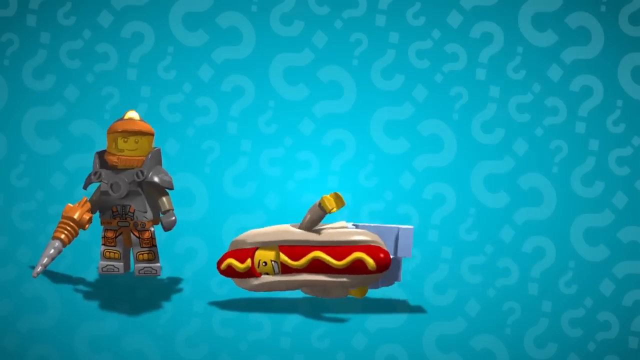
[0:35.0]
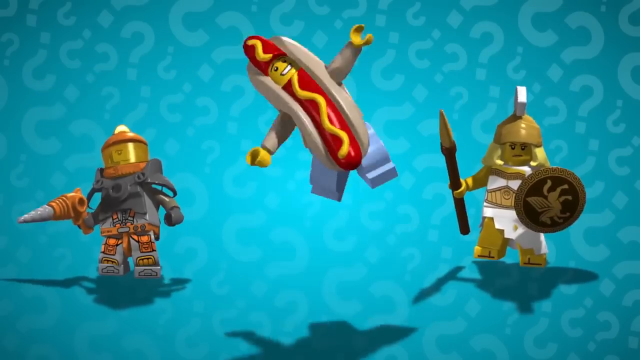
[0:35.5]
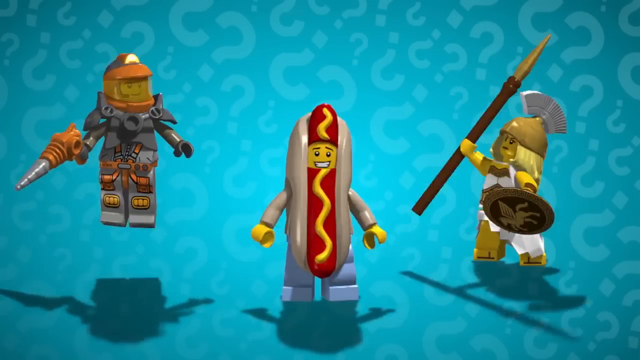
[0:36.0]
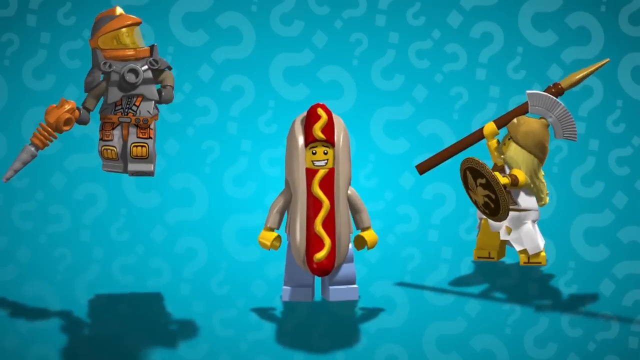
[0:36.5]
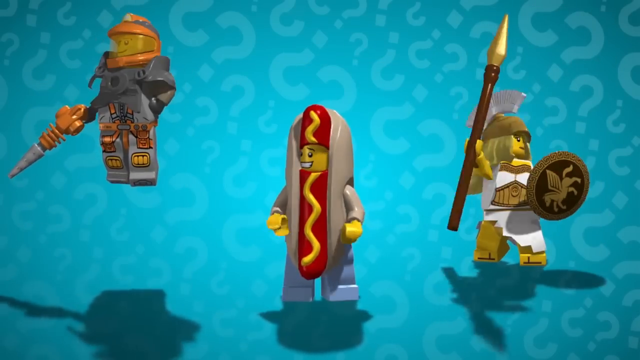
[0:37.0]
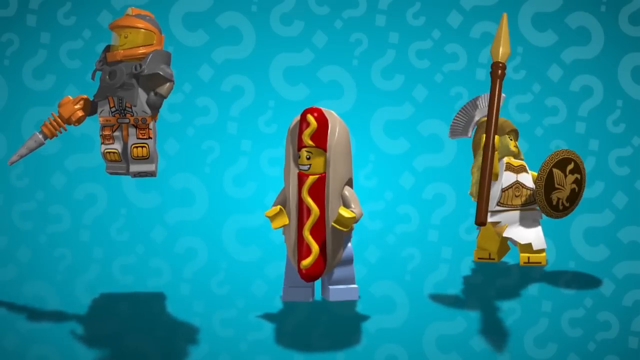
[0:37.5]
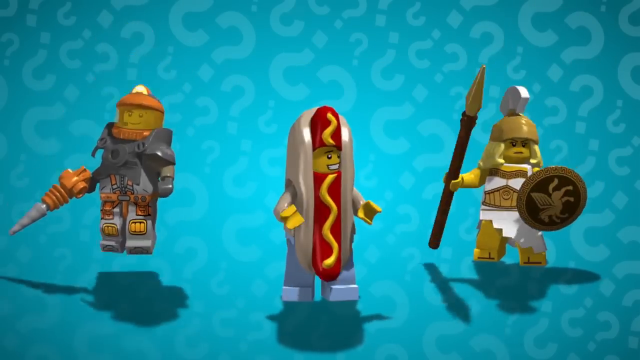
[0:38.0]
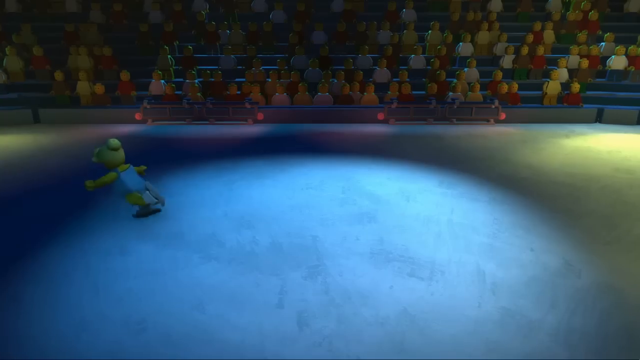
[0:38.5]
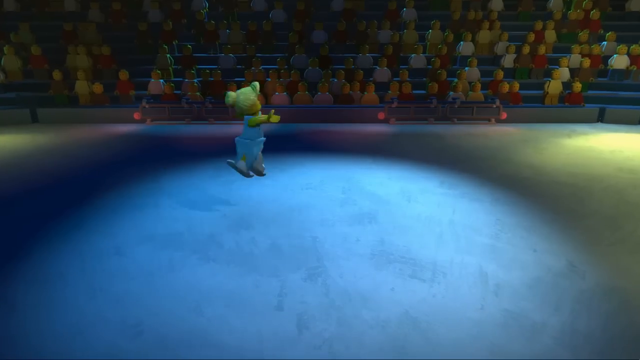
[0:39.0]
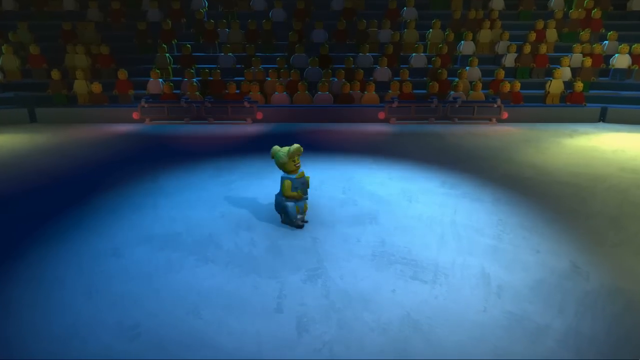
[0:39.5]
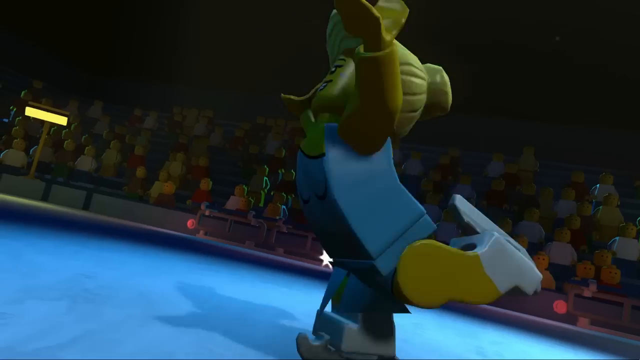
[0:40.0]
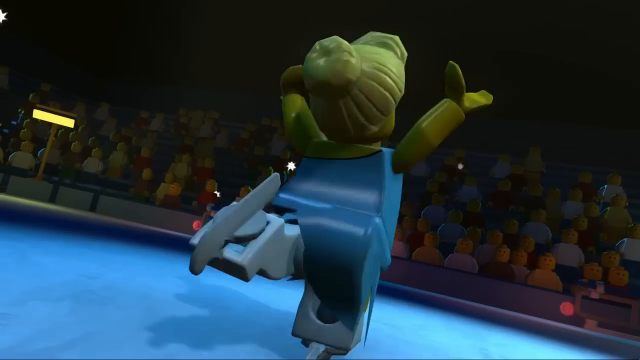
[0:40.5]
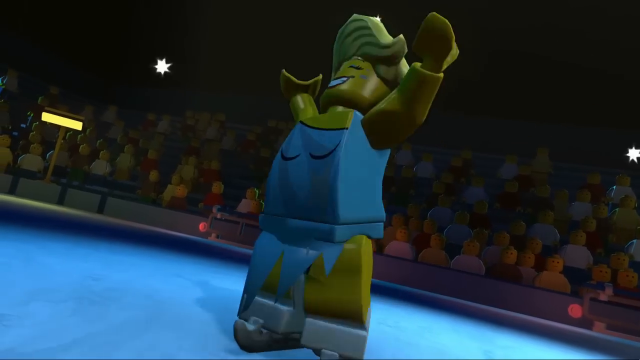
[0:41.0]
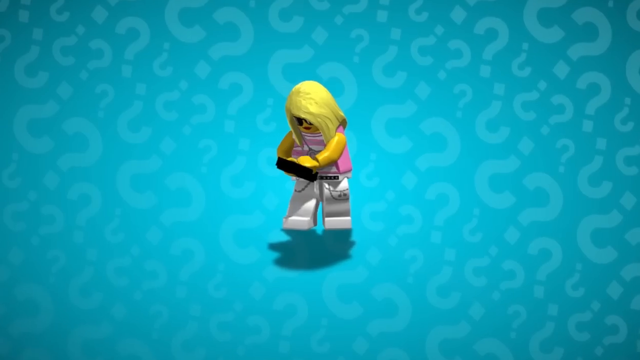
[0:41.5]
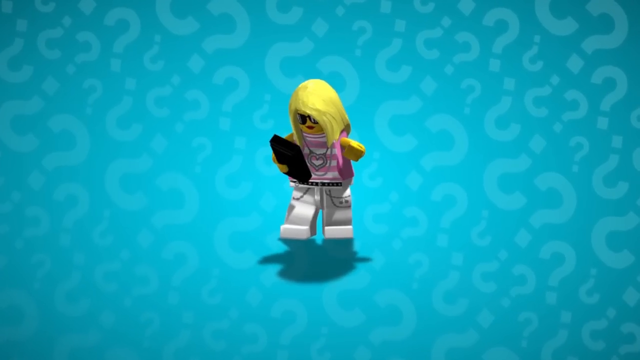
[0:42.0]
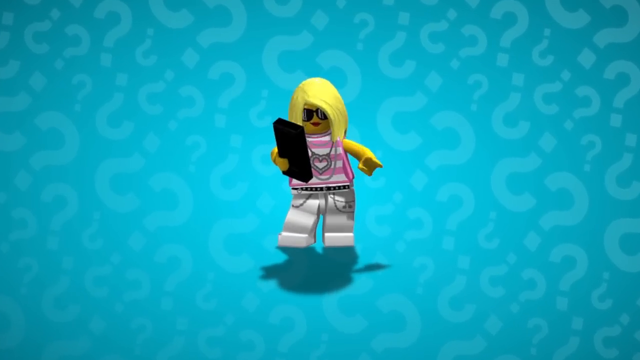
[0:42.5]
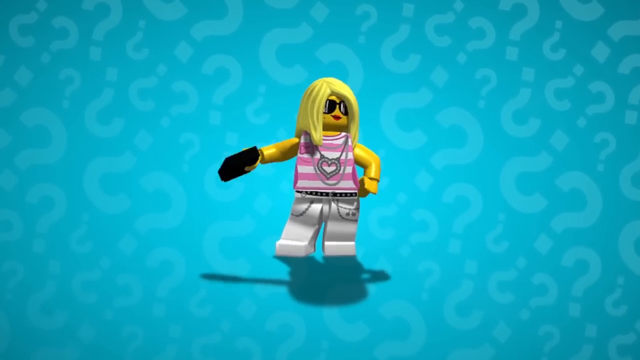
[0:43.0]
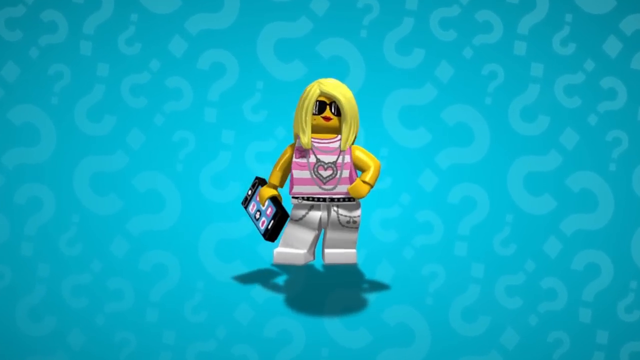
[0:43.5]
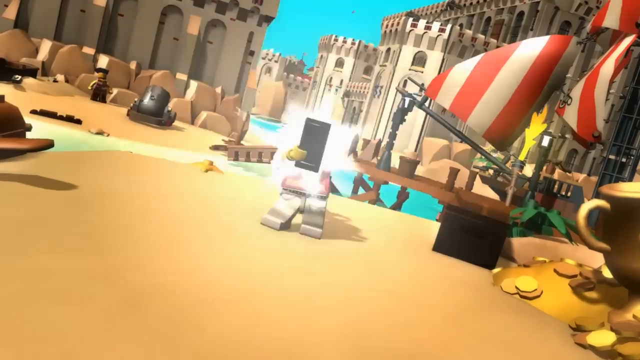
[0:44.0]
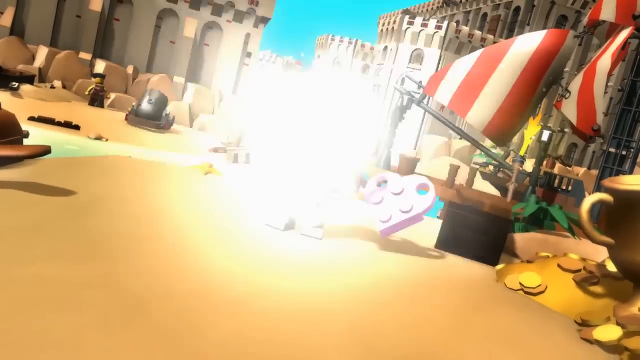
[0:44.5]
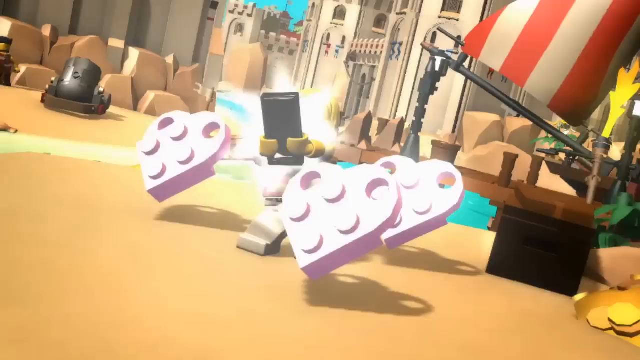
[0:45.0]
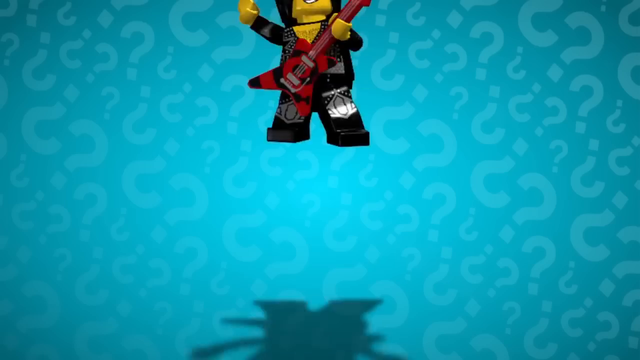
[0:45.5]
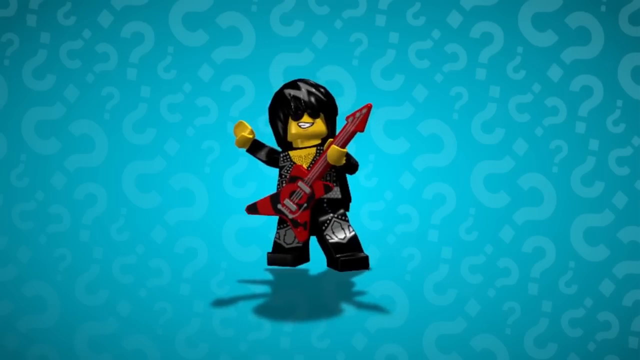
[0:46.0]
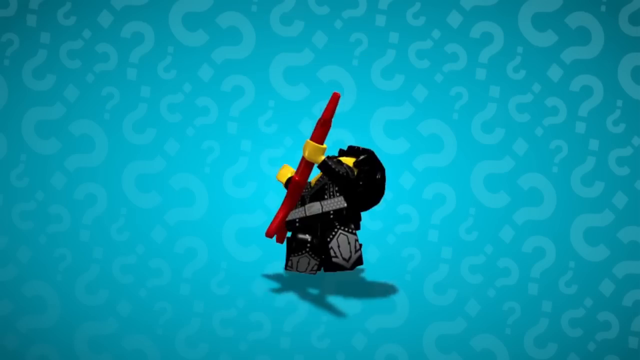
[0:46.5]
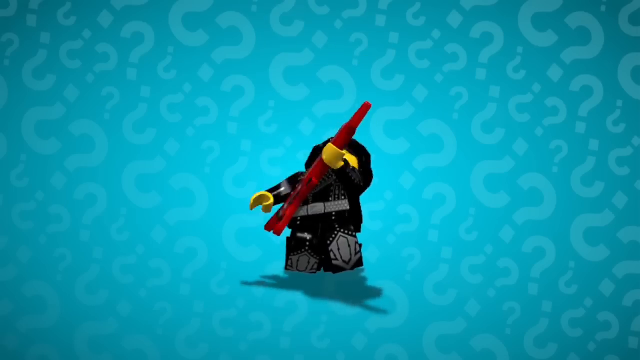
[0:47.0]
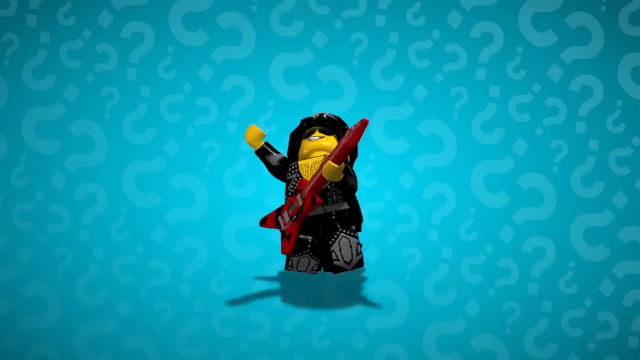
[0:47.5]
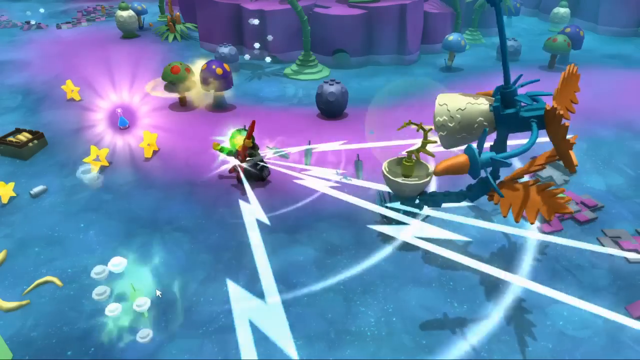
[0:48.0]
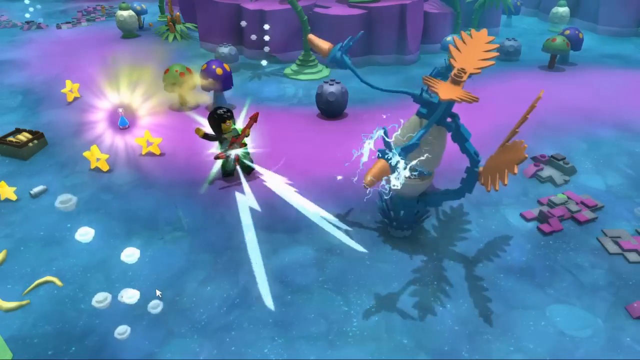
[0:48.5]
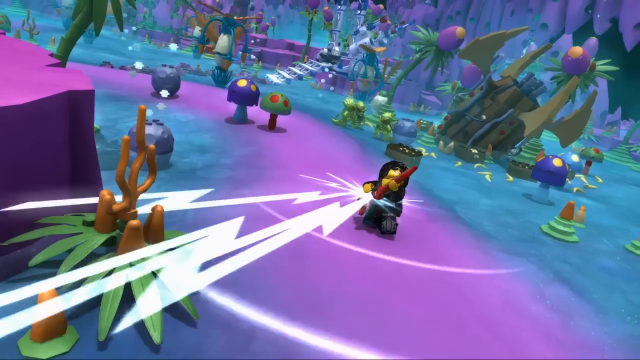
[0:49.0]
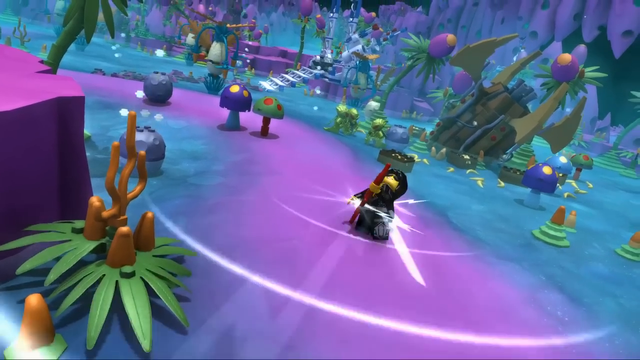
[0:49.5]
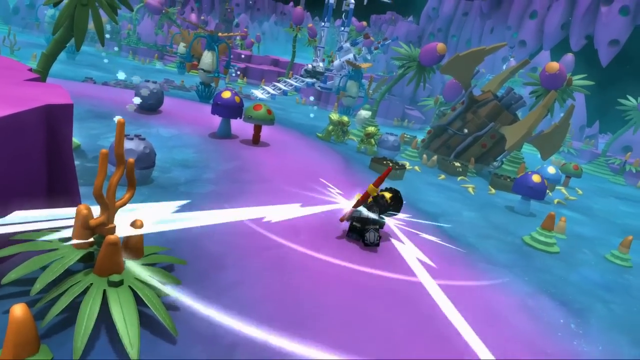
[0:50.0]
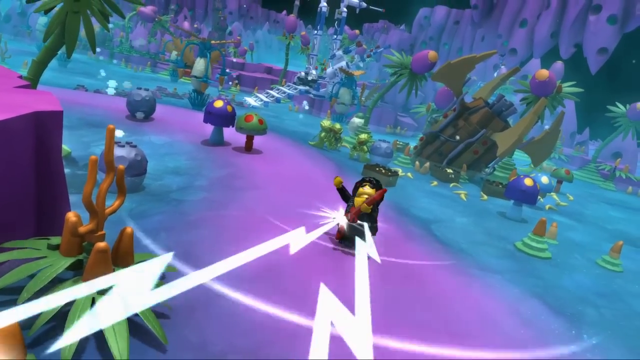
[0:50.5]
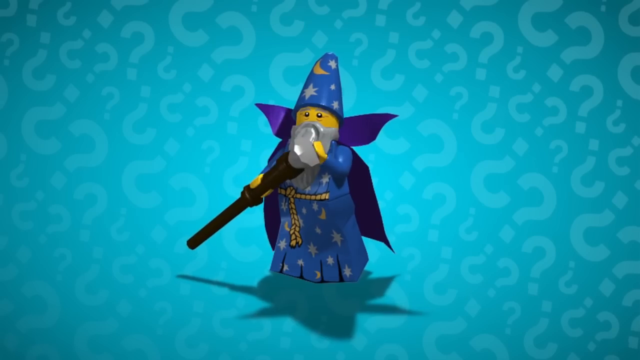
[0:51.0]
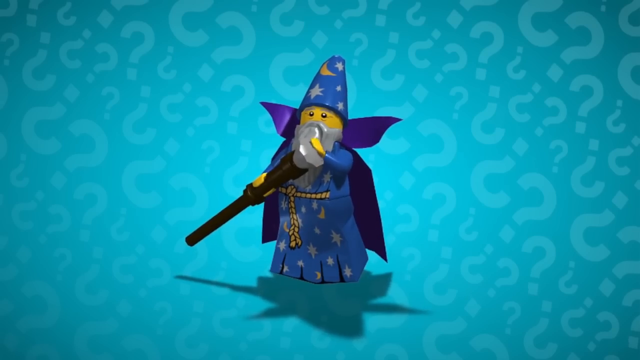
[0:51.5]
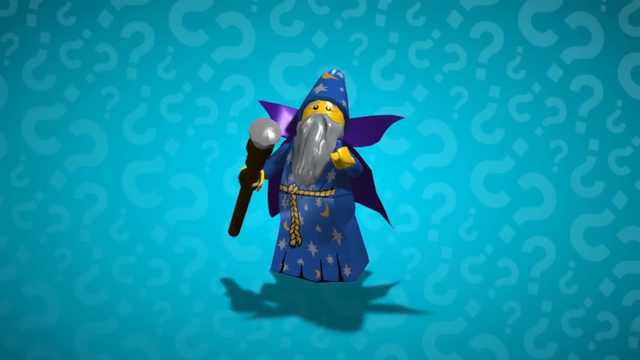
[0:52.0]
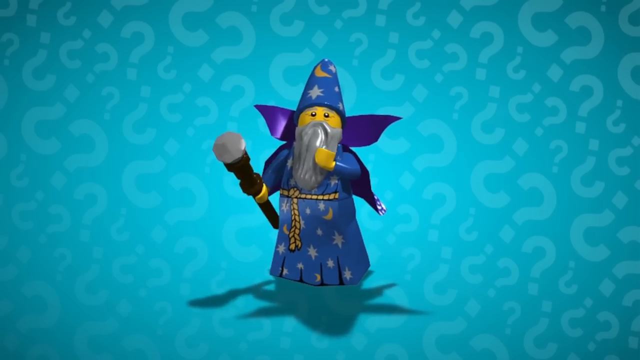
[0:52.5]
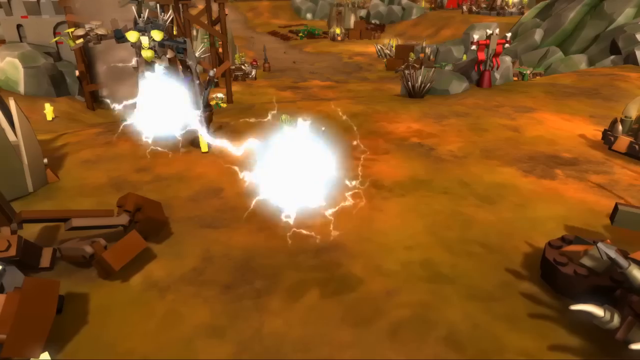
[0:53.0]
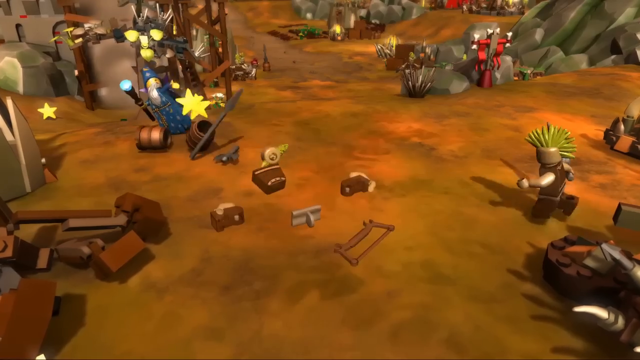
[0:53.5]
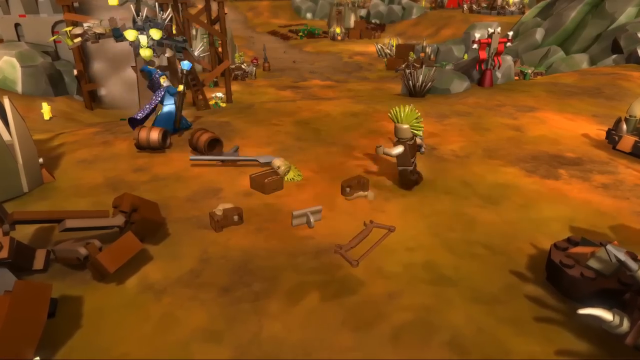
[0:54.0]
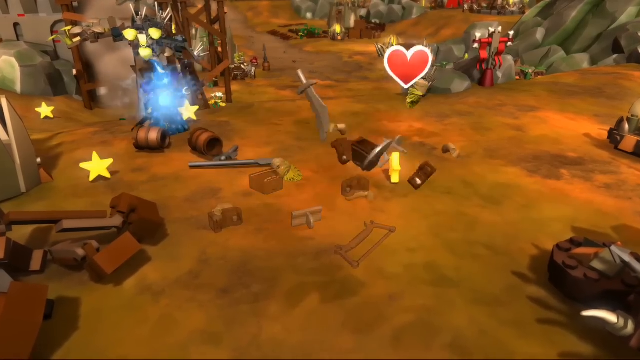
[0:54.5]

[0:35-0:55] A man in some sort of space suit drops down in place of the images of the yellow packages and stands beside the hot dog man, who is lying on his side. Some sort of gladiator warrior, a female, drops down as well; when she lands, the hot dog man stands up and they all sort of jump. The setting changes to an ice rink with faceless LEGO people watching in the background and a blonde ice skater with a blonde bun and a blue dress dancing. On the turquoise screen, a blonde female LEGO figure in a pink and white striped shirt and black sunglasses plays on her phone. She then appears in a sort of sandy area with lots of buildings, holding her phone, from which two LEGO pink hearts appear and start circling her. On the turquoise screen, a rock star with a bedazzled black suit, black hair, black sunglasses and a red electric guitar strums his guitar. In another setting he uses his guitar to emit lightning bolts against something that is maybe trying to fight him. On the turquoise screen, a wizard appears in a blue robe with gold details, with purple wings, a long gray beard and a black and silver staff, and in the next scene he uses his powers in a desert-like area.